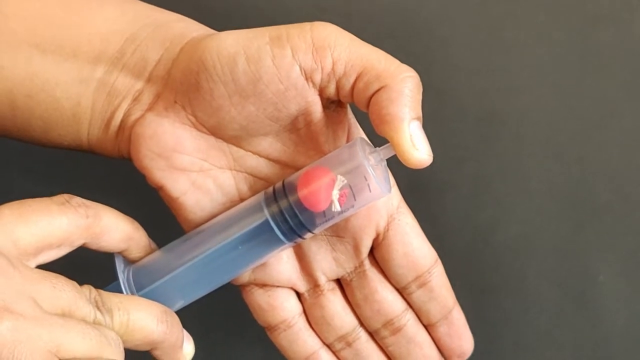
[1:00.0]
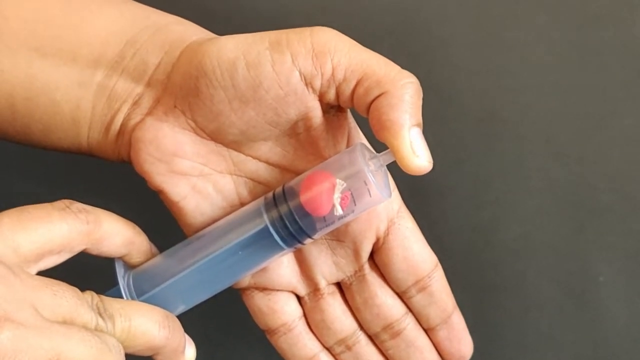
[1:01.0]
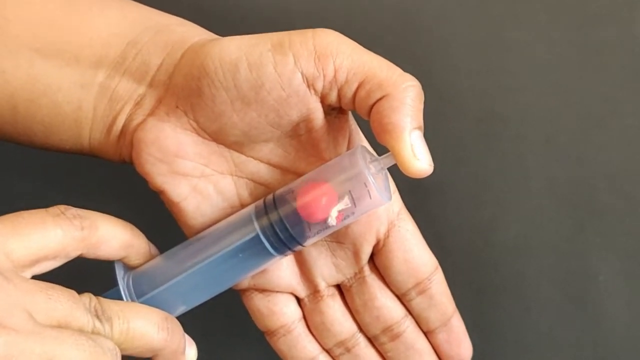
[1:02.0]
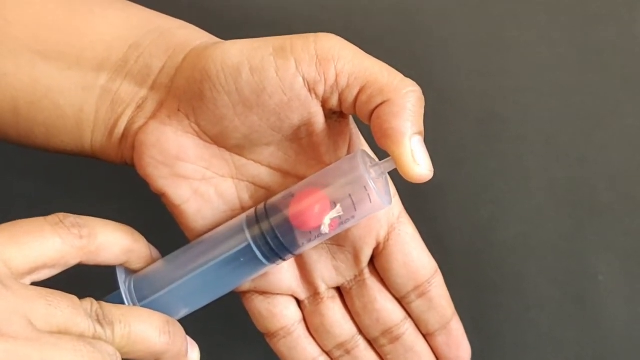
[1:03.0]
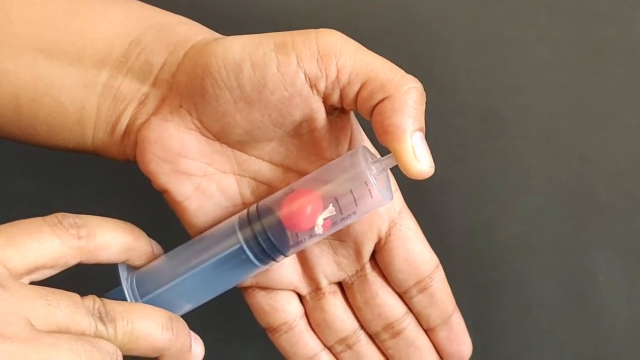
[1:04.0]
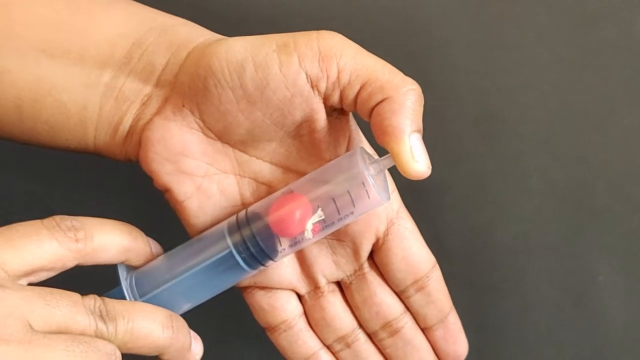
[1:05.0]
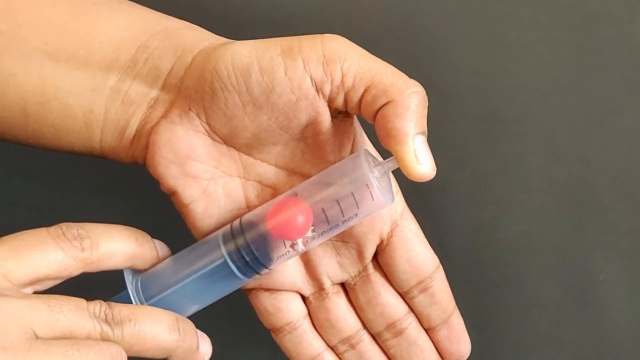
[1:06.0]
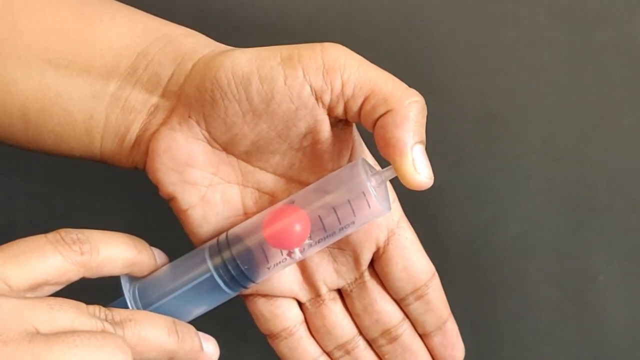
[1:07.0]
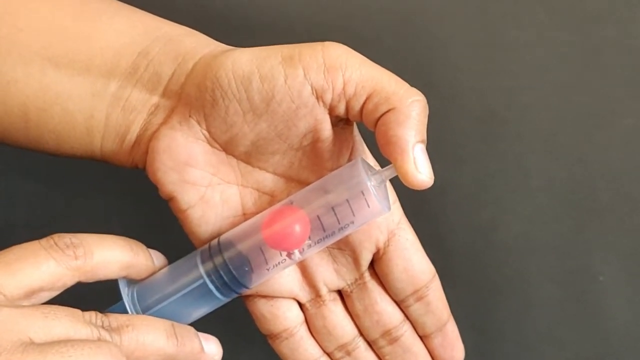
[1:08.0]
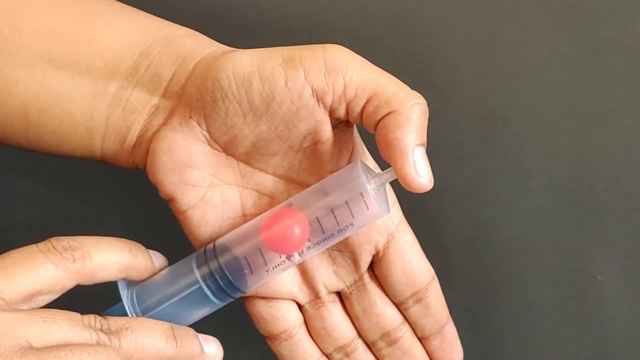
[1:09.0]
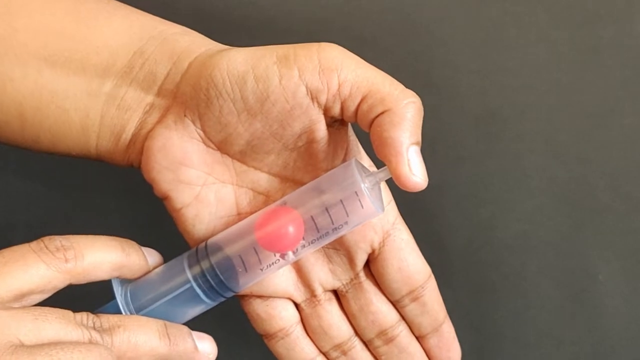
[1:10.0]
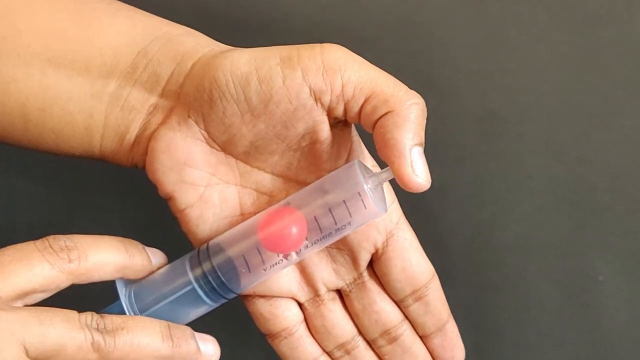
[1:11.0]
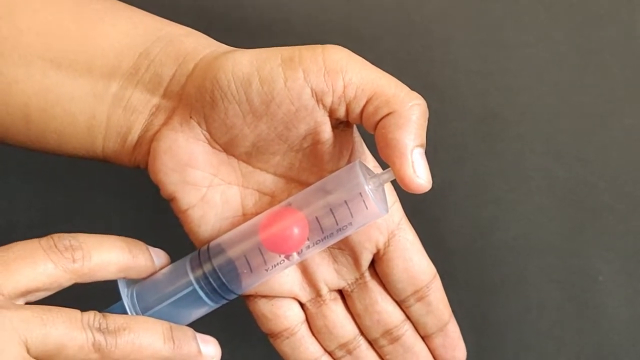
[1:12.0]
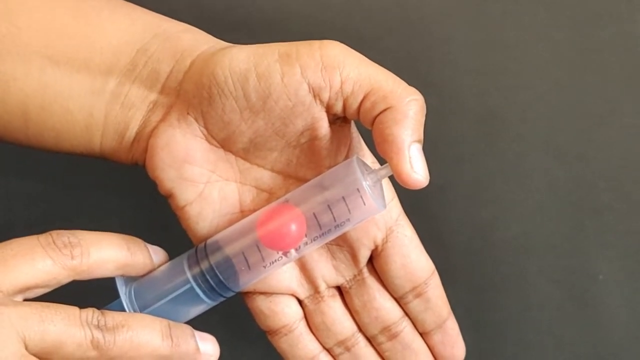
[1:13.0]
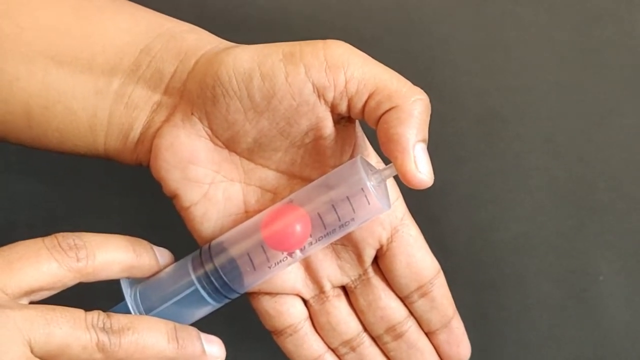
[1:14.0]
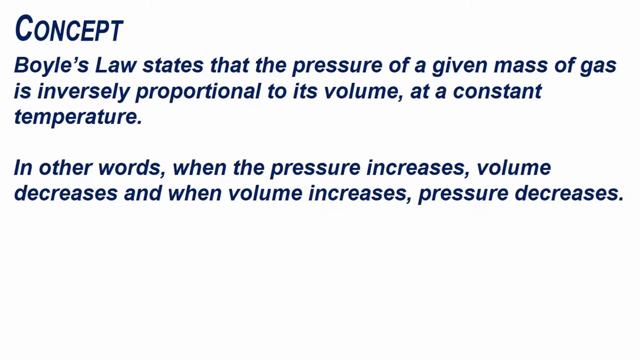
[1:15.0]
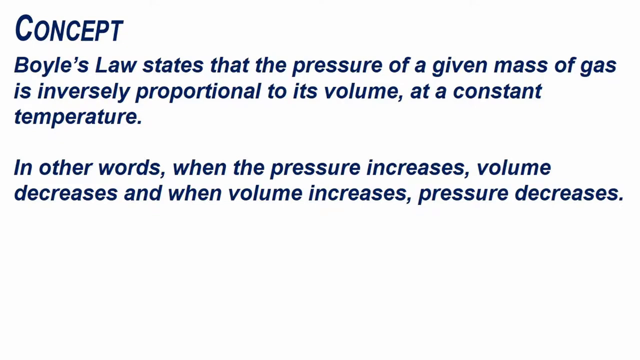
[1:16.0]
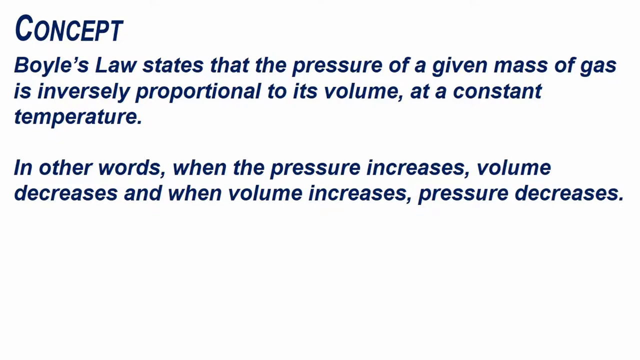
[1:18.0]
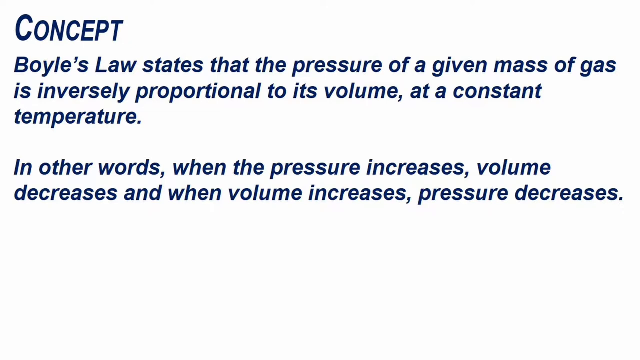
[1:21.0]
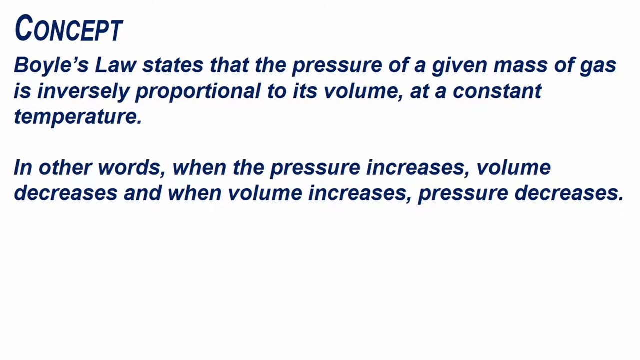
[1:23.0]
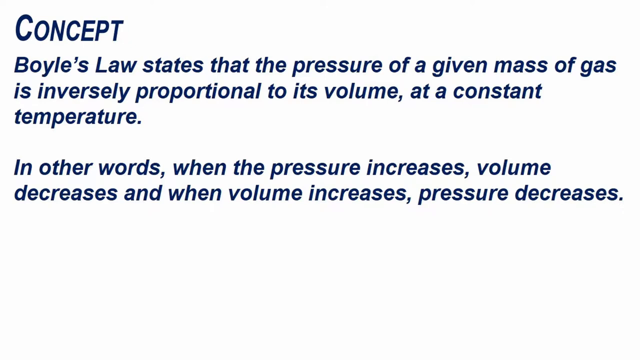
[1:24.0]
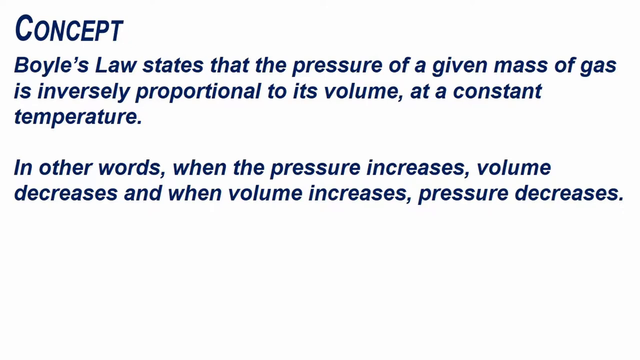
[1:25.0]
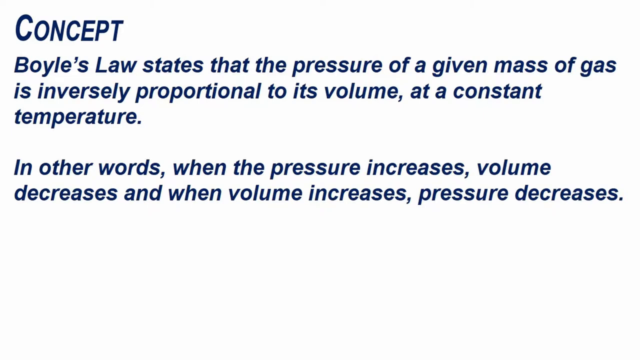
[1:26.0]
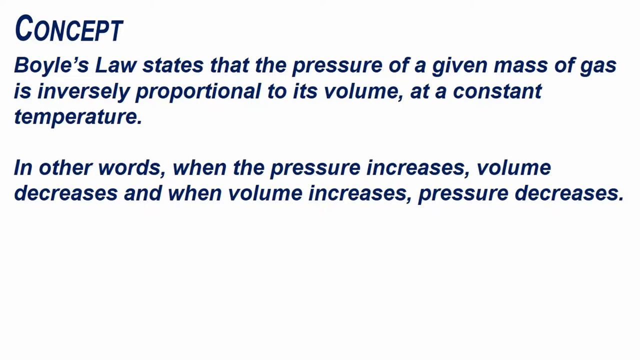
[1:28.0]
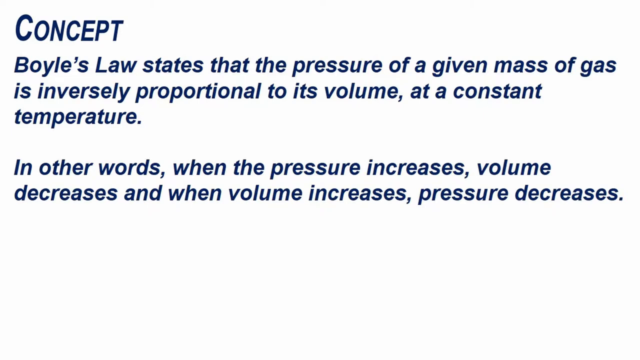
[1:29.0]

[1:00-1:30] The required items are shown: a clear syringe, a red balloon, and a white thread. Next comes the clear white syringe with an inflated red balloon tied with the white thread. The person takes out the syringe plunger, shows the red balloon, inserts it into the syringe where the plunger was, and puts the plunger back in. With the syringe's nozzle closed, the person pushes the plunger in, making the balloon go up. At some point the balloon stops, and the pressure appears to bring the plunger down. The balloon is left in the middle of the syringe and appears smaller now. Boyle's law is then explained, and viewers are encouraged to try this at home.